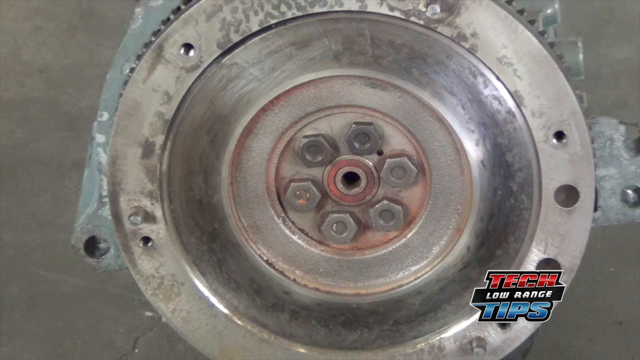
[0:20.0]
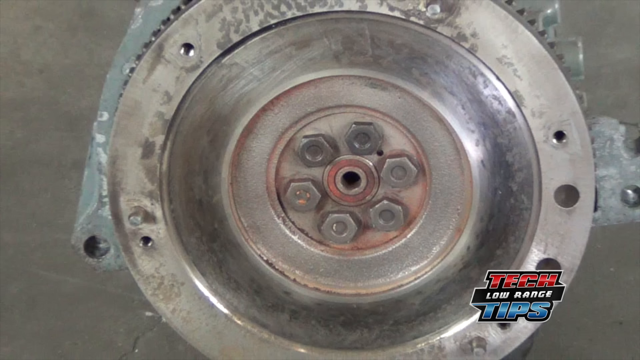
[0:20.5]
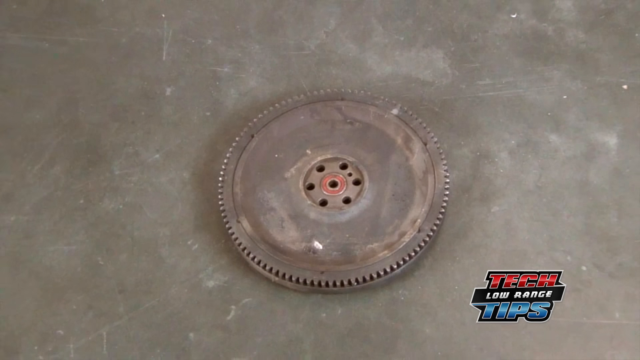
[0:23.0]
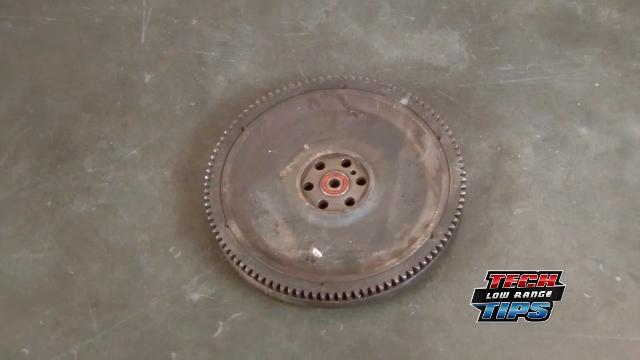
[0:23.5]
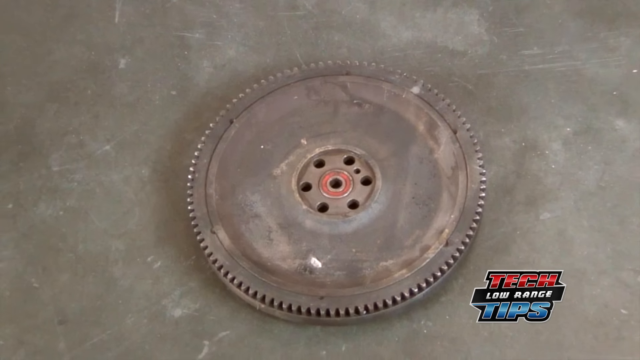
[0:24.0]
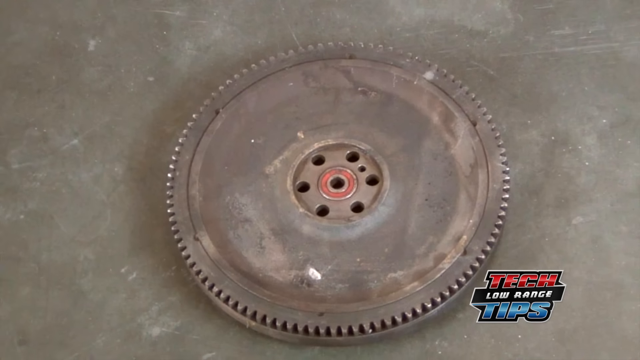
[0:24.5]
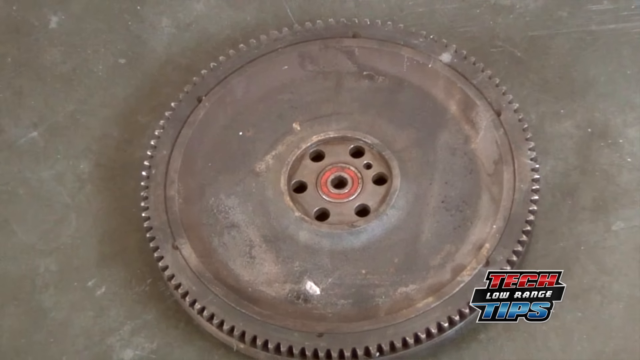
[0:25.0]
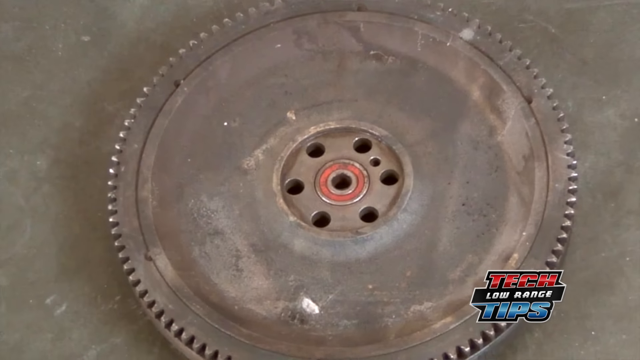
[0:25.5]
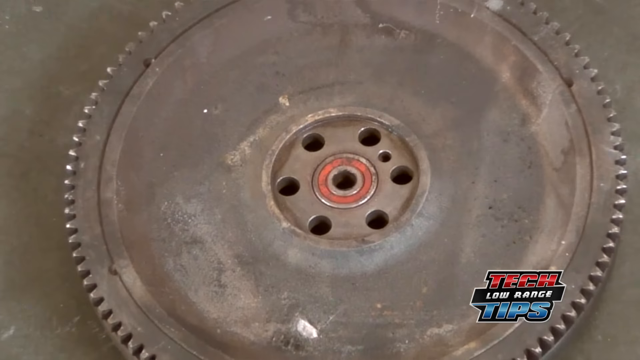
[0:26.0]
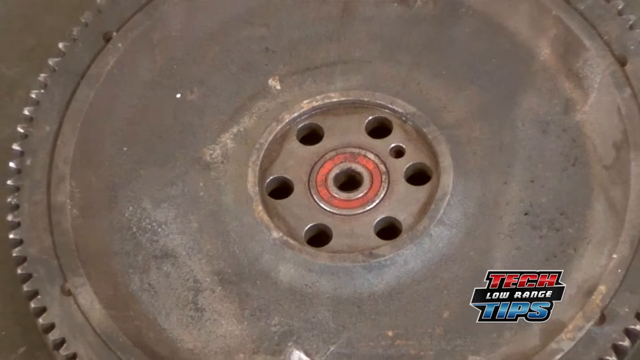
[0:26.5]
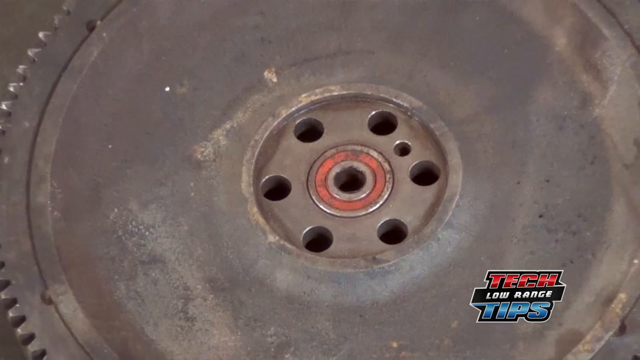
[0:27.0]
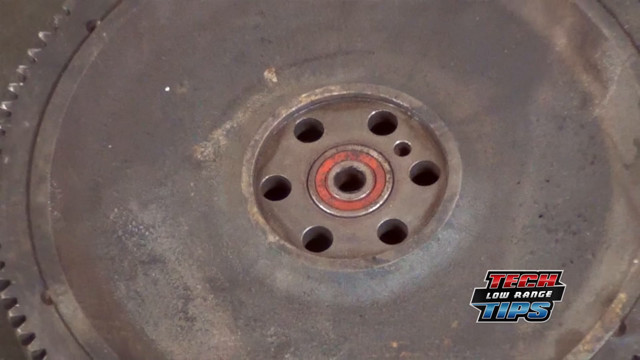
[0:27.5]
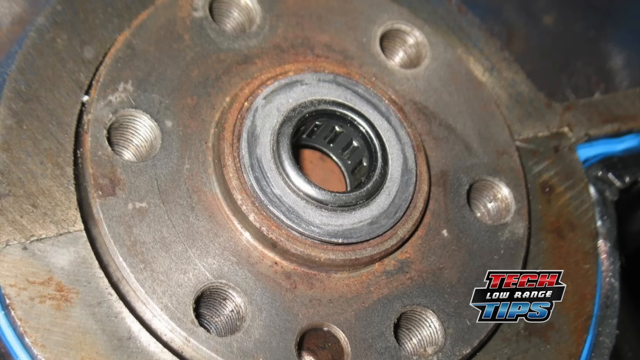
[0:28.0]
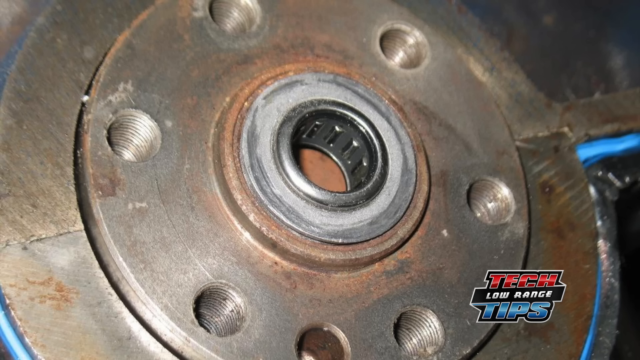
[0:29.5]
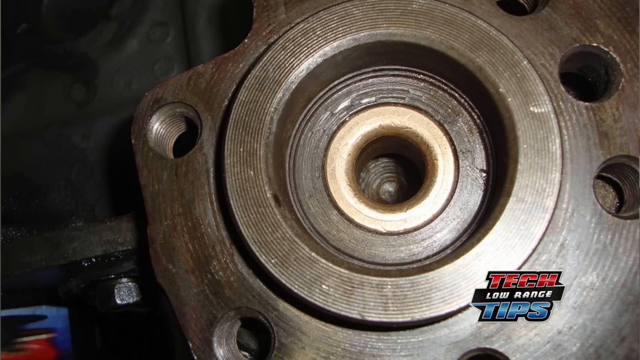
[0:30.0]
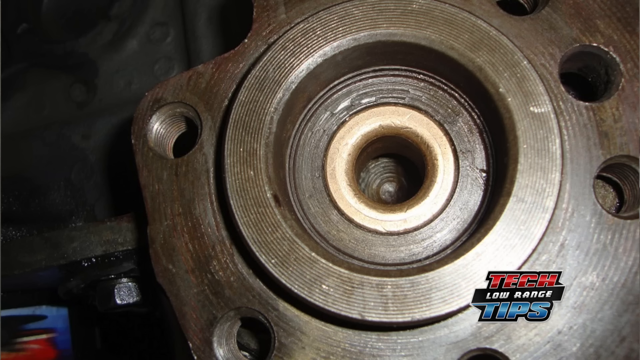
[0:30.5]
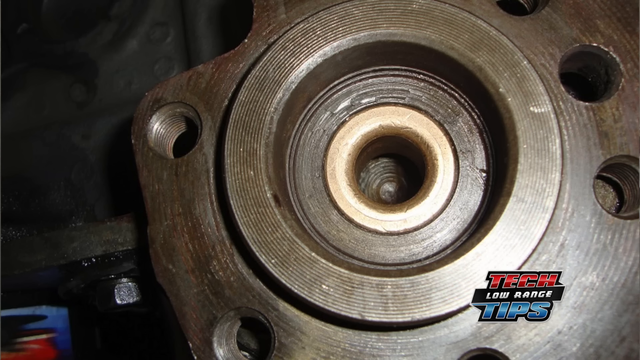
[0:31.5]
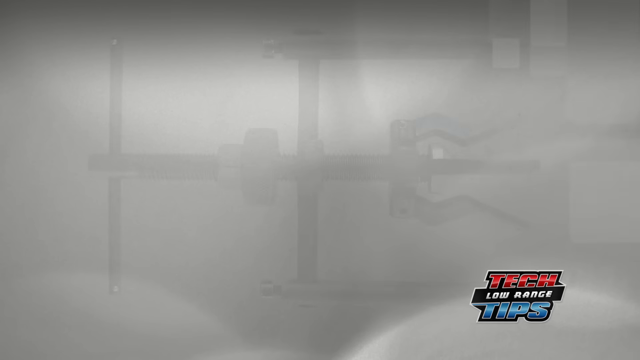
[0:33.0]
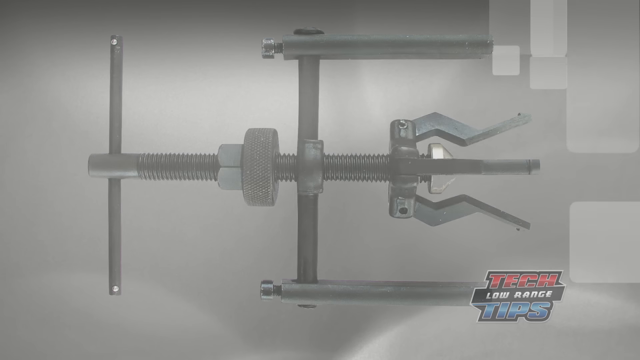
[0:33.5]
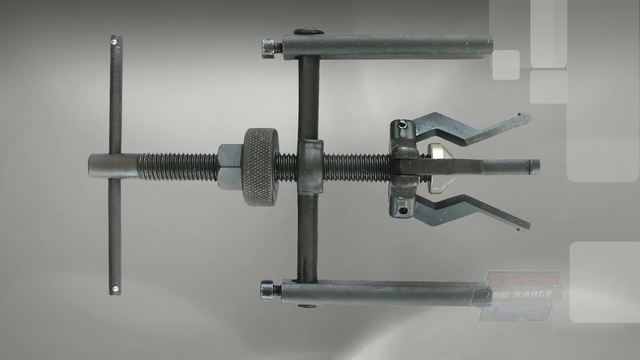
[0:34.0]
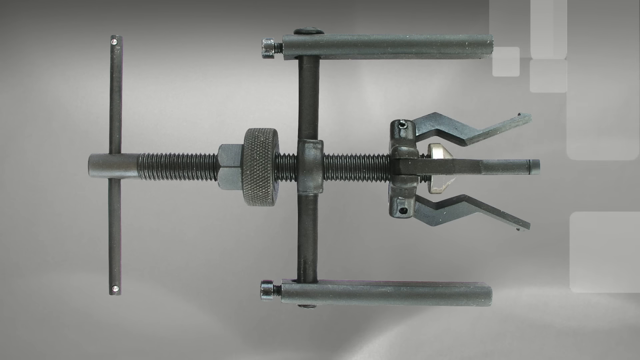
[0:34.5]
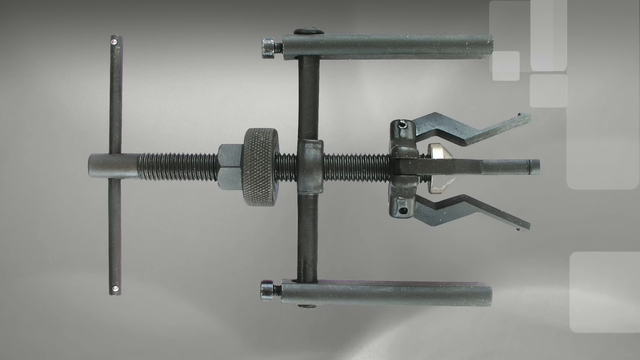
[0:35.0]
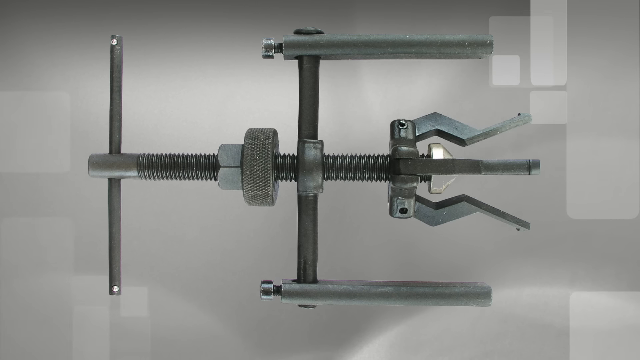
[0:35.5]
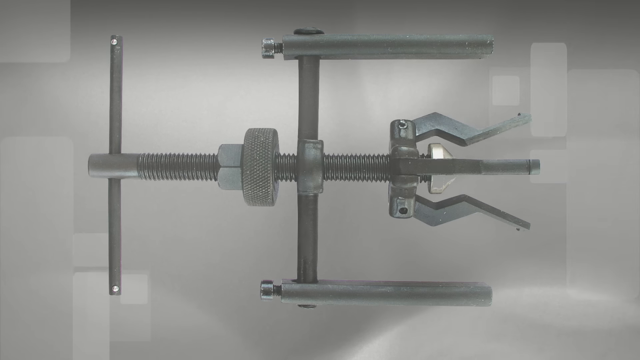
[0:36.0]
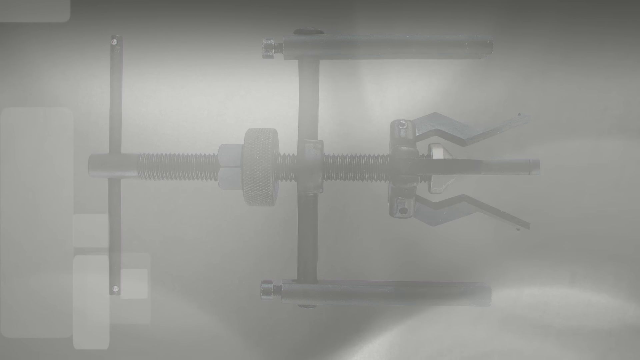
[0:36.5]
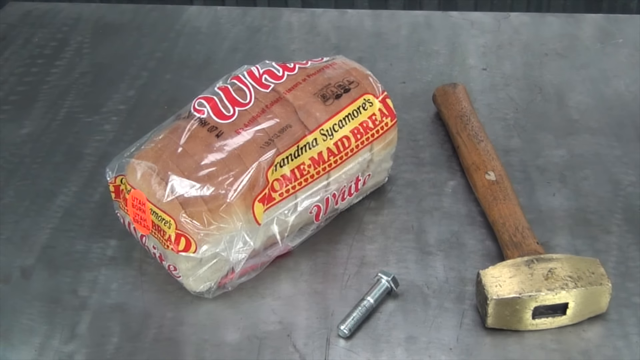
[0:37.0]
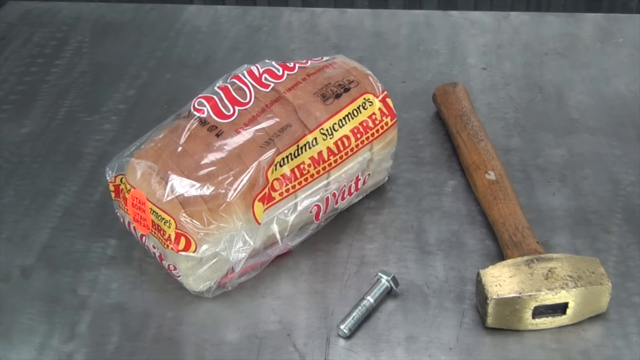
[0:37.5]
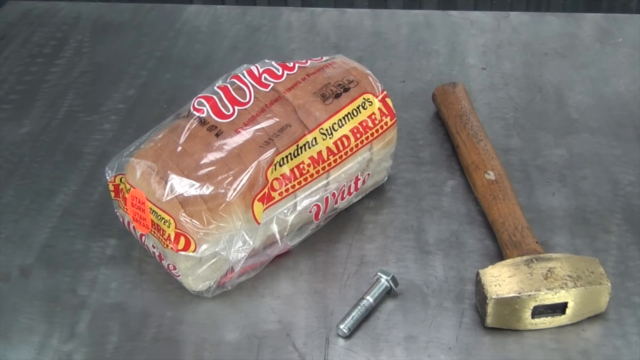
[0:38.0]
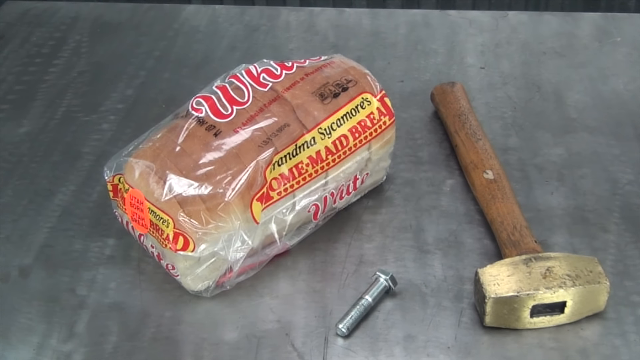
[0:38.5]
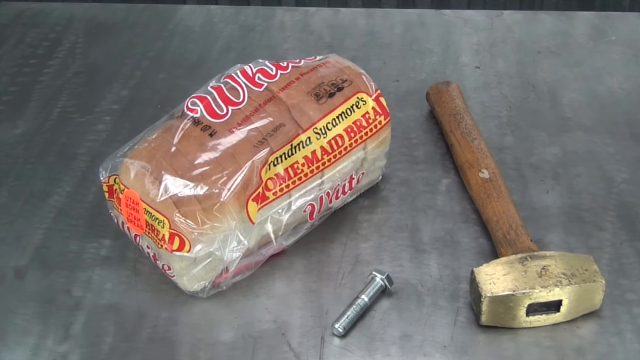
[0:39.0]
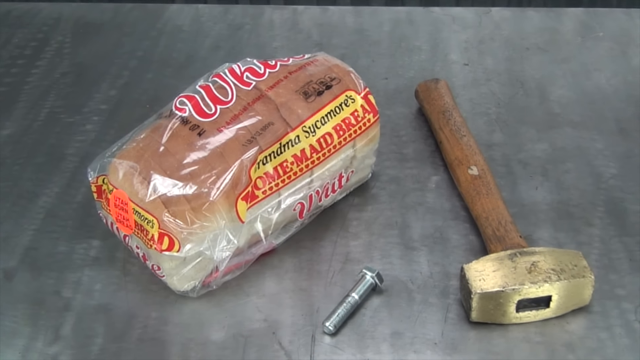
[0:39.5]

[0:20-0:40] The text "tech low range tips" appears. A little silver, circular gadget is shown with about six holes around the circle. Next comes a little screw gadget, then Grandma Sycamore's homemade bread. The bread, a nail and a hammer are all on what looks like a gray table; the bread is apparently wheat bread.